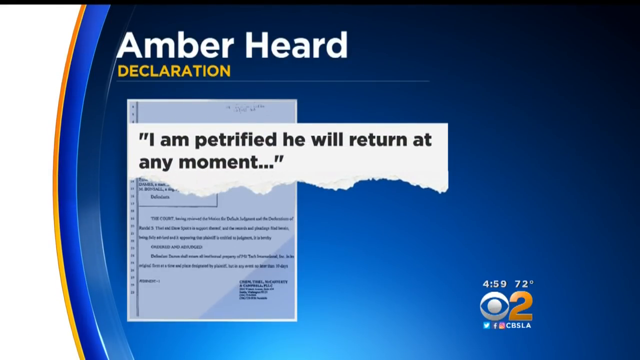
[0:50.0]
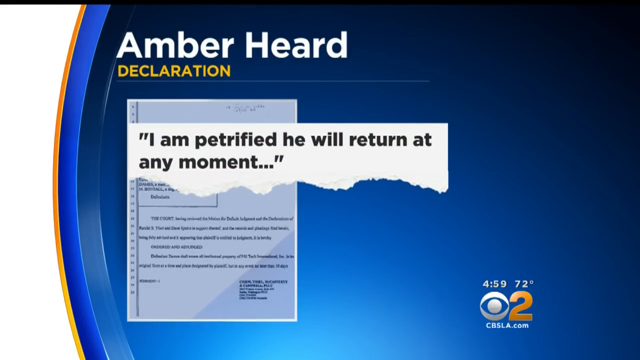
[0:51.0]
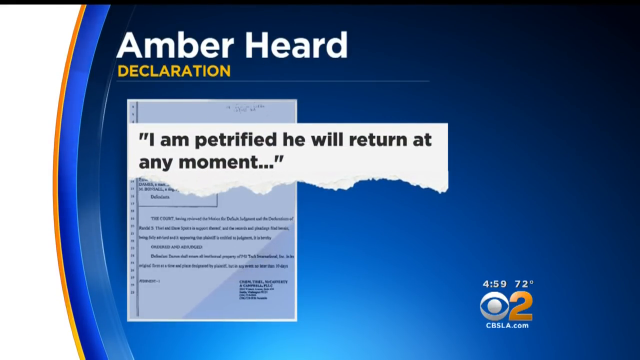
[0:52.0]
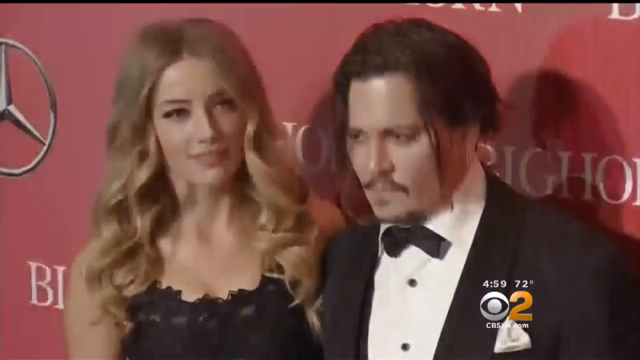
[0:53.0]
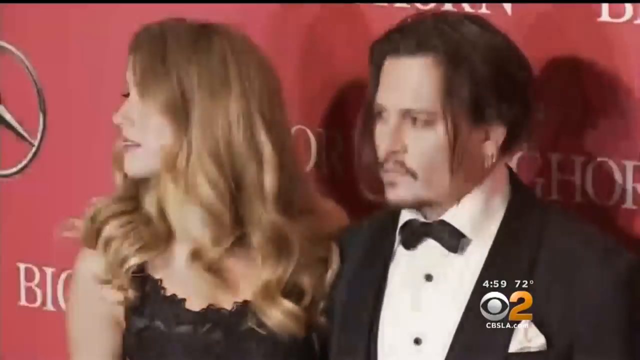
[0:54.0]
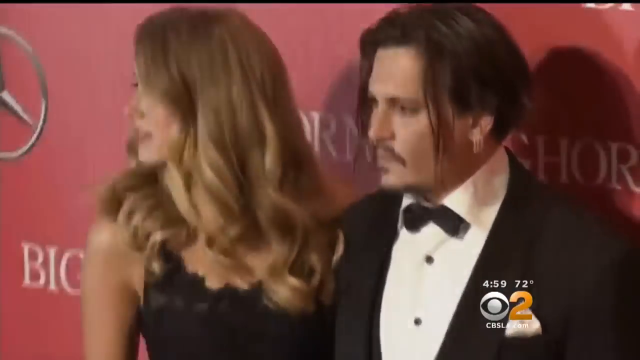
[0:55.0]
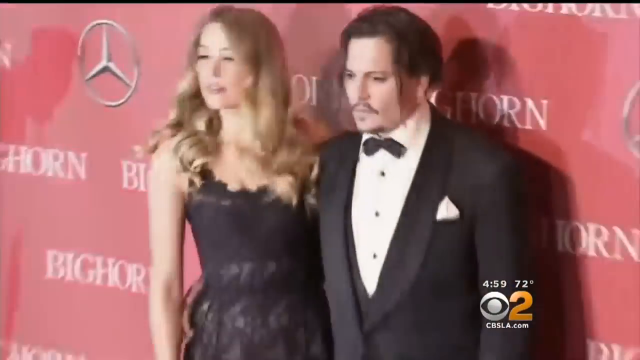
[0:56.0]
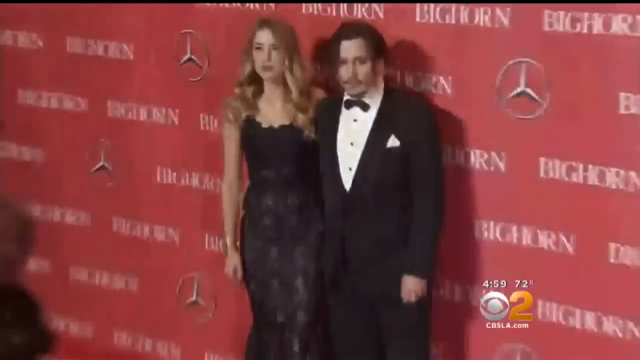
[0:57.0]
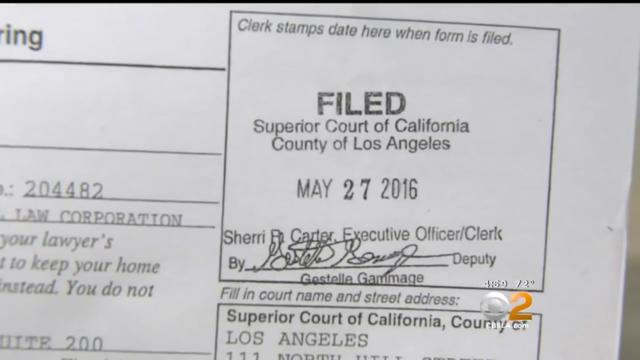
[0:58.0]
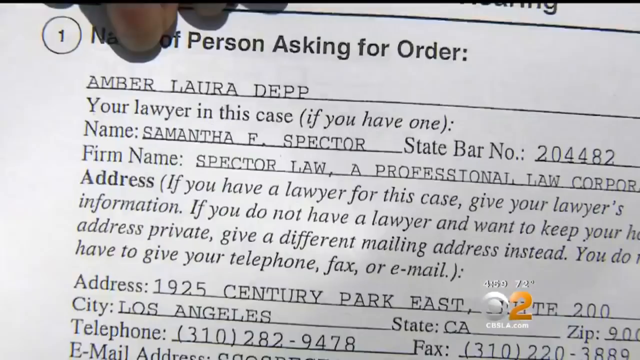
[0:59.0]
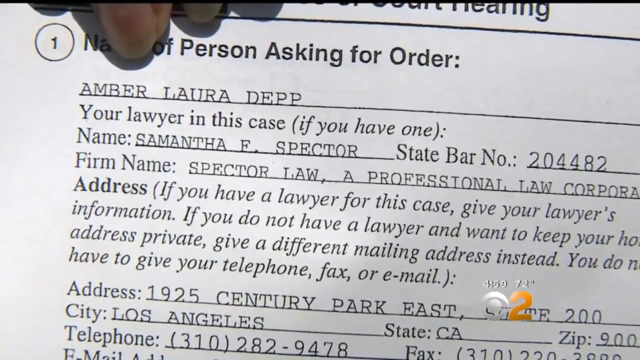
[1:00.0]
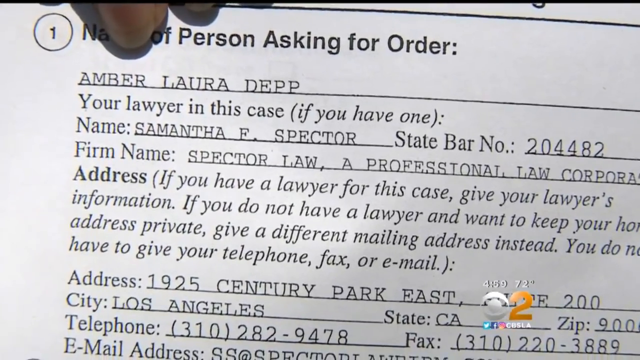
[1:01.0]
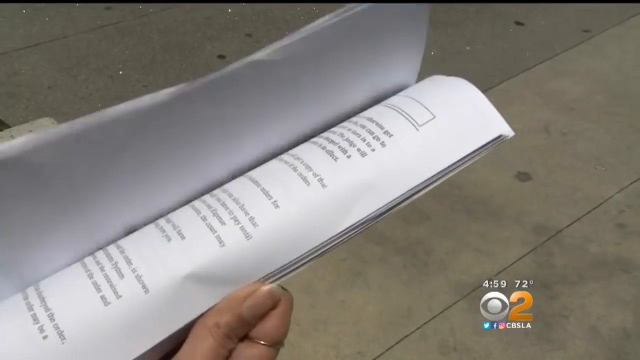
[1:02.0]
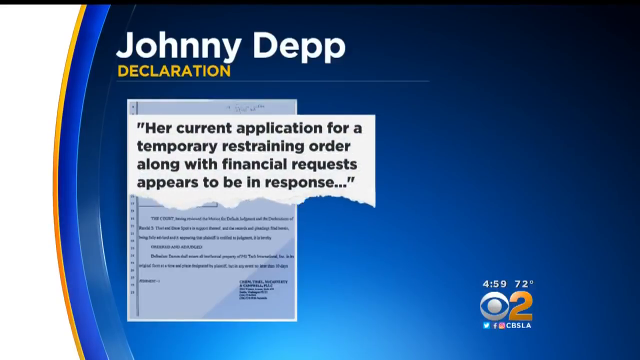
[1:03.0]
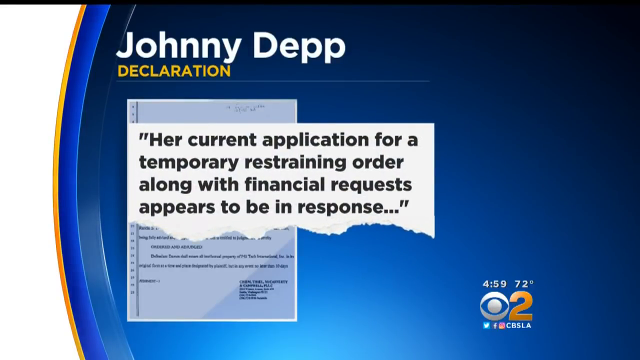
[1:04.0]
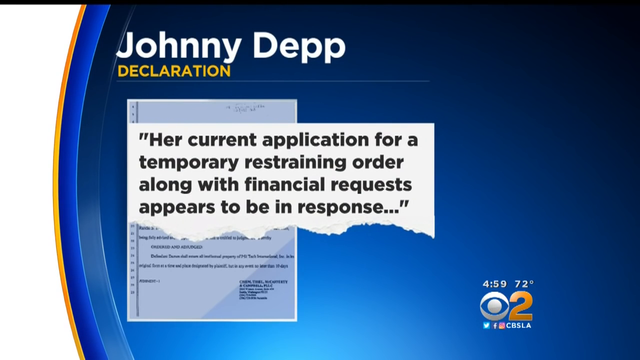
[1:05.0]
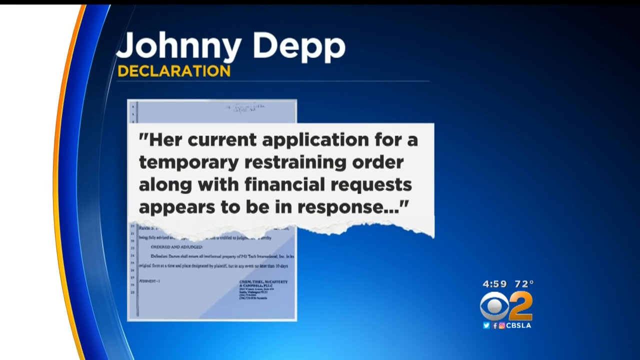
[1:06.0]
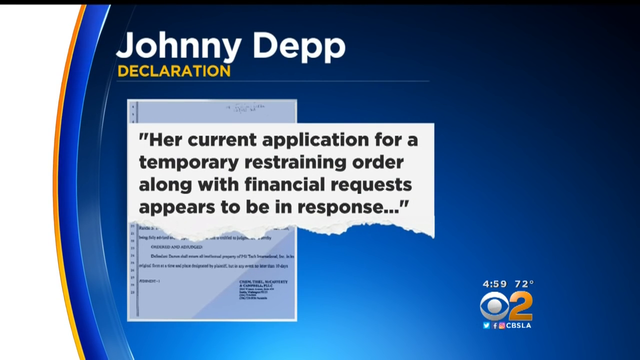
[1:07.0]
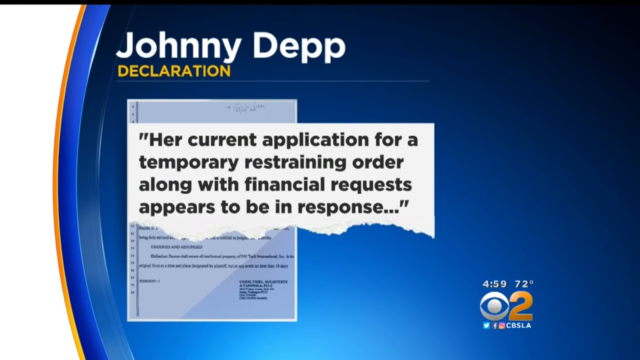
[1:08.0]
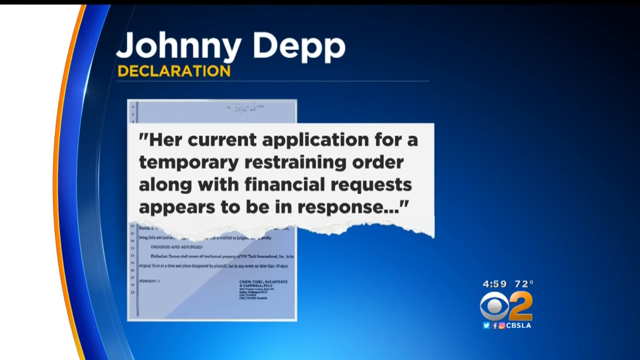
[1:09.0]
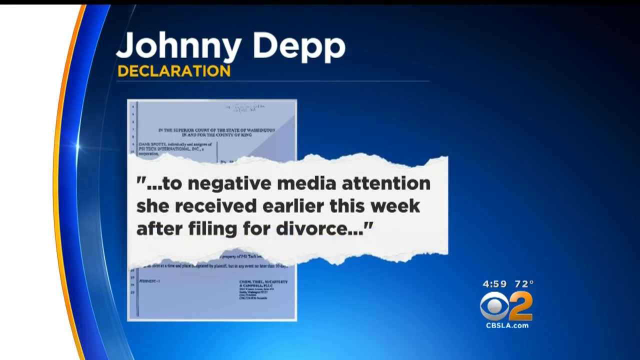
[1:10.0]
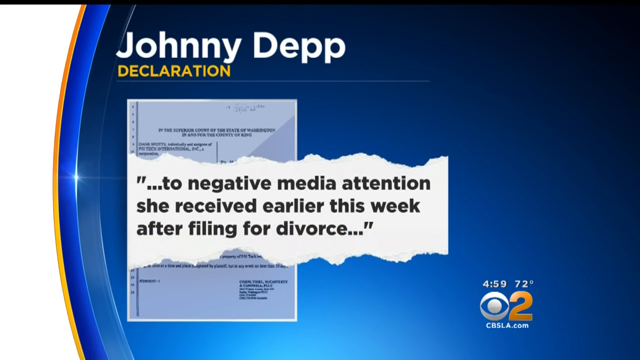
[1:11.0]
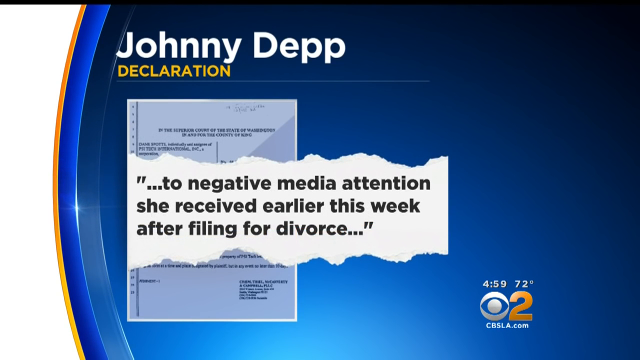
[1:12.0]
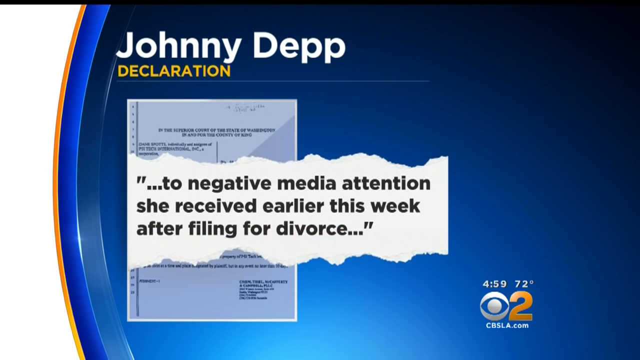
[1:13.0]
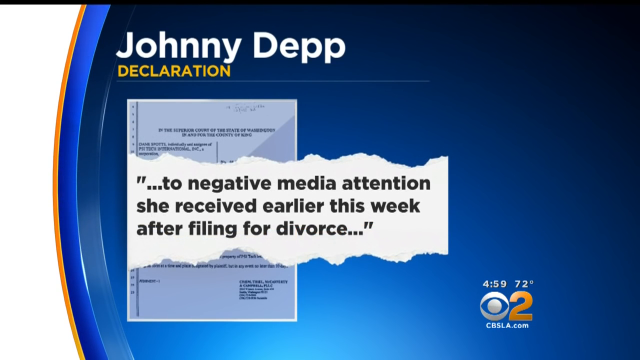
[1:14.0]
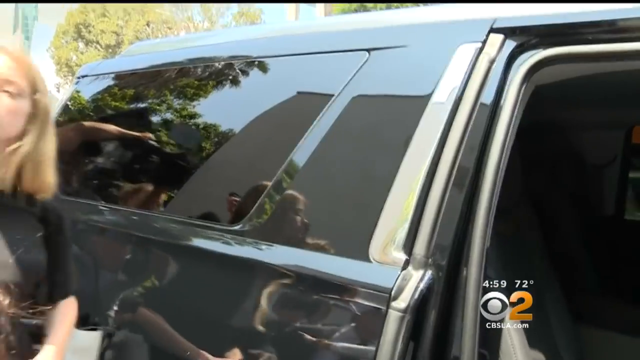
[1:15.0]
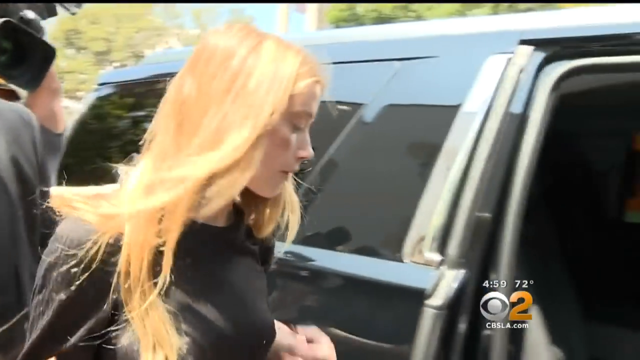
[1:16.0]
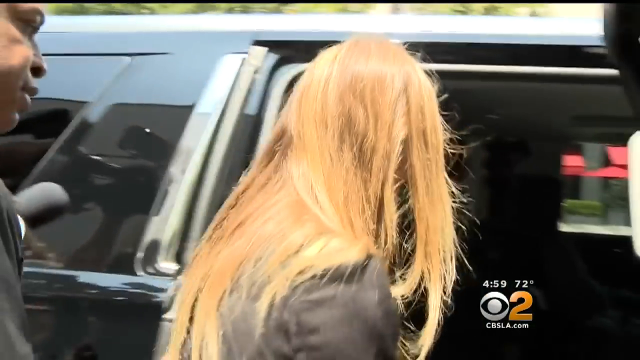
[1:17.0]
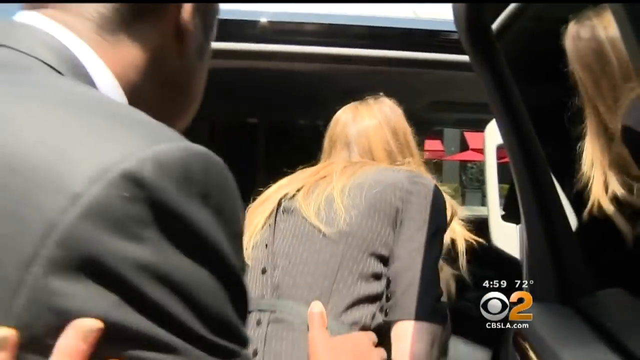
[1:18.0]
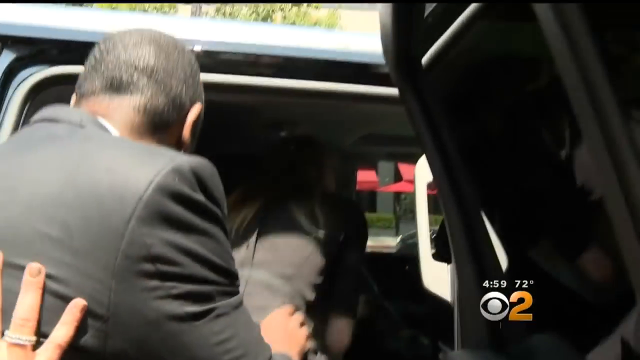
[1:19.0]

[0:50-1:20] Amber Heard's declaration continues on screen, reading: "I am petrified, he will return at any moment." Footage follows of Johnny Depp and Amber Heard on the red carpet at what appears to be a Mitsubishi gala, called the Big Thorn. Next is an image of a case filed against the actor in the Superior Court of California, County of Los Angeles; the document states that the person asking for the order is Amber Laura Depp. Then a declaration of Johnny Depp is shown: "Her current application for a temporary restraining order along with financial requests appears to be in response to negative media attention she received earlier this week after filing for divorce."